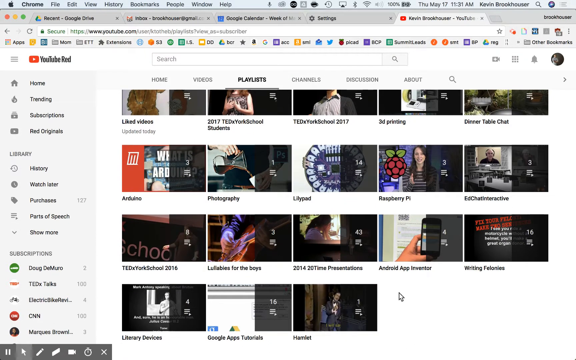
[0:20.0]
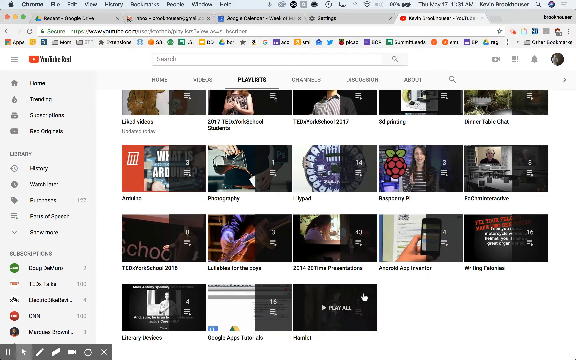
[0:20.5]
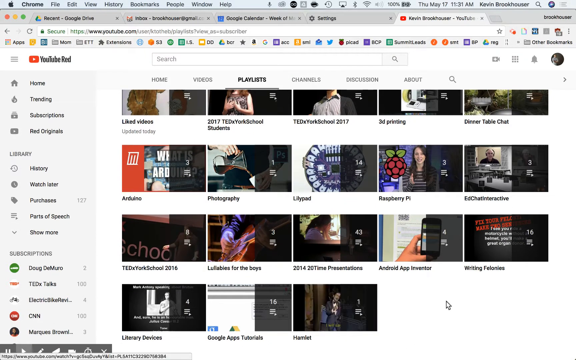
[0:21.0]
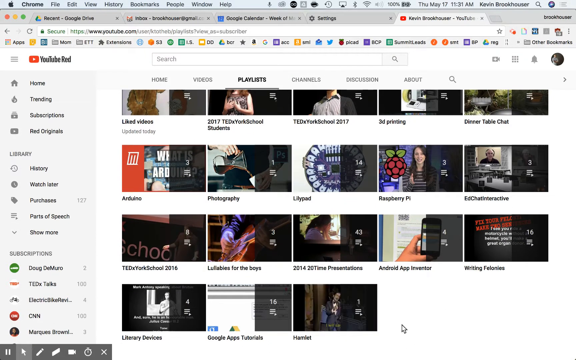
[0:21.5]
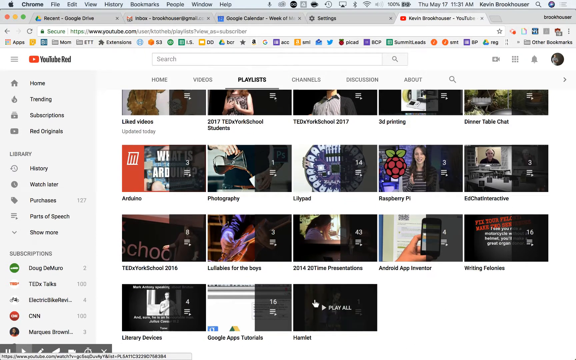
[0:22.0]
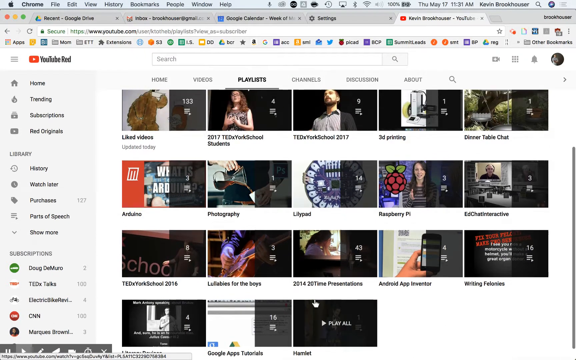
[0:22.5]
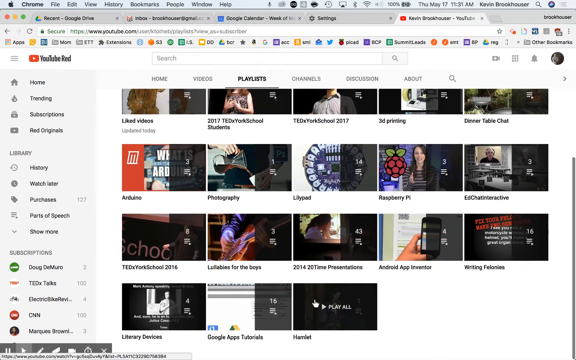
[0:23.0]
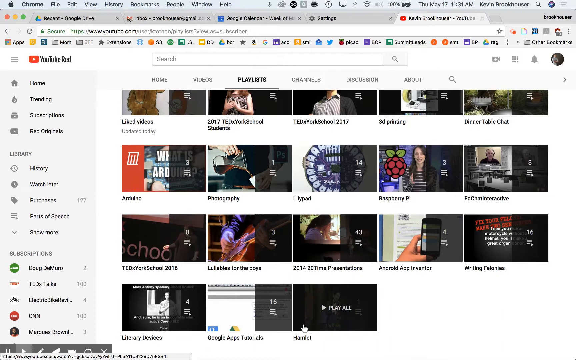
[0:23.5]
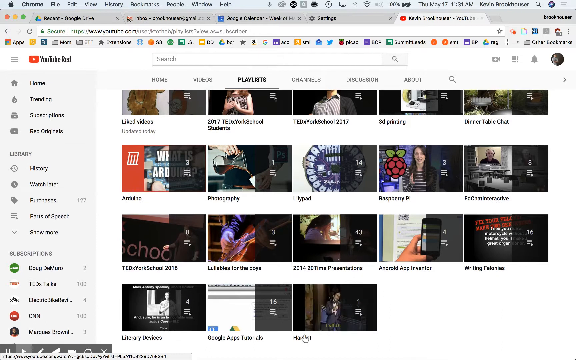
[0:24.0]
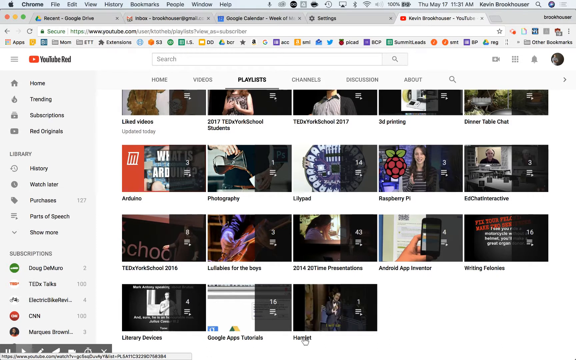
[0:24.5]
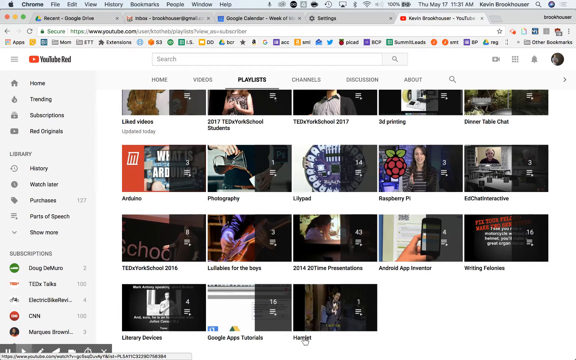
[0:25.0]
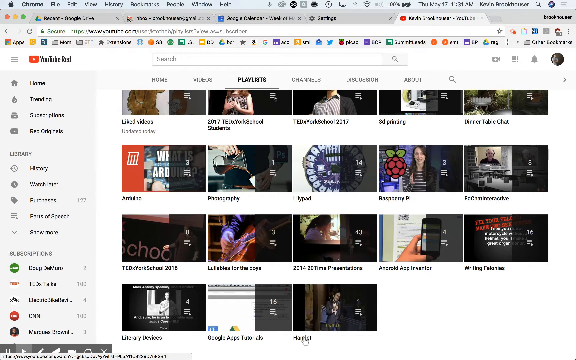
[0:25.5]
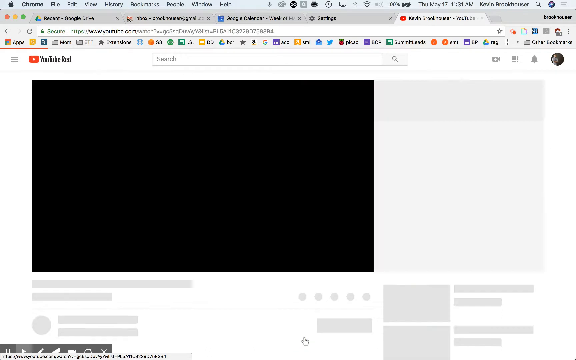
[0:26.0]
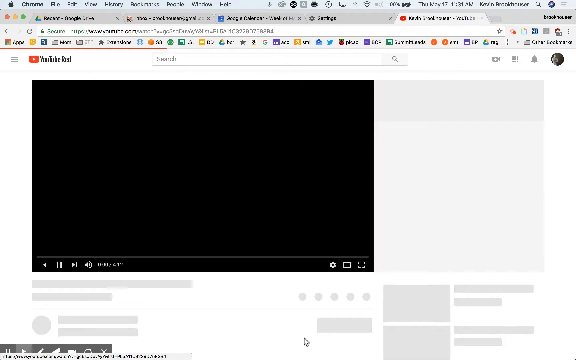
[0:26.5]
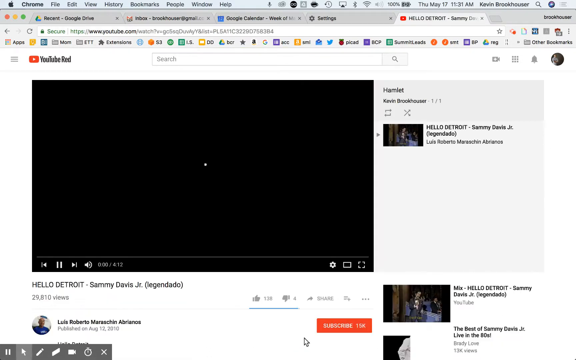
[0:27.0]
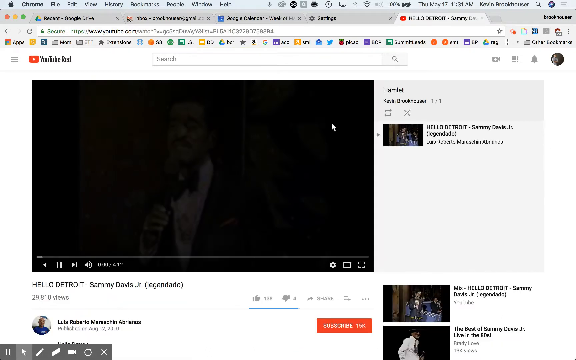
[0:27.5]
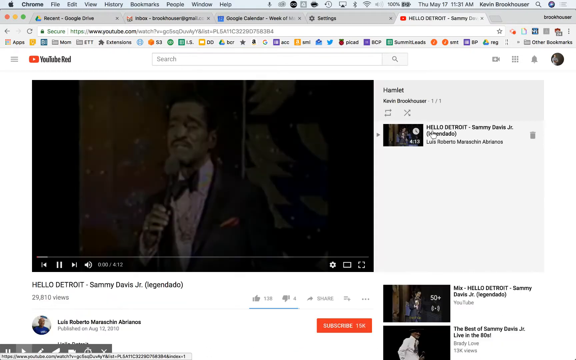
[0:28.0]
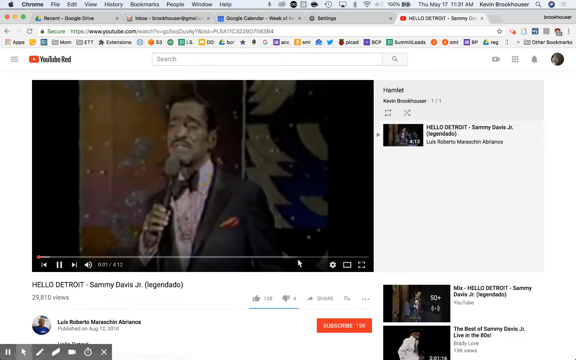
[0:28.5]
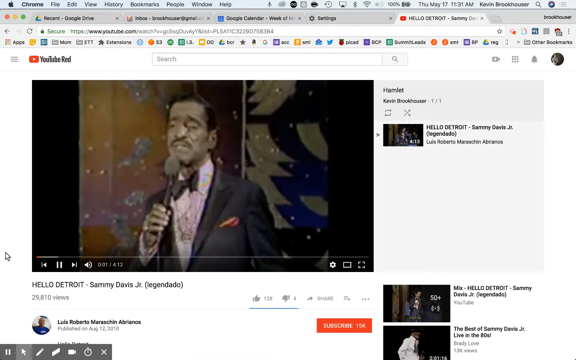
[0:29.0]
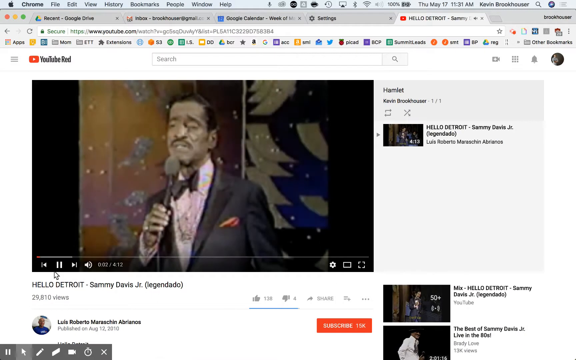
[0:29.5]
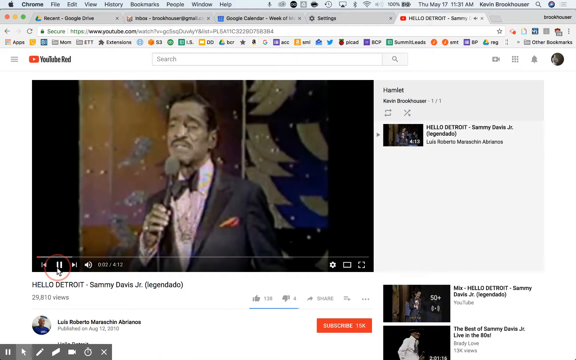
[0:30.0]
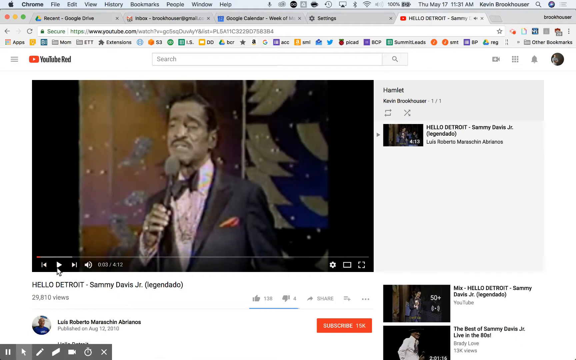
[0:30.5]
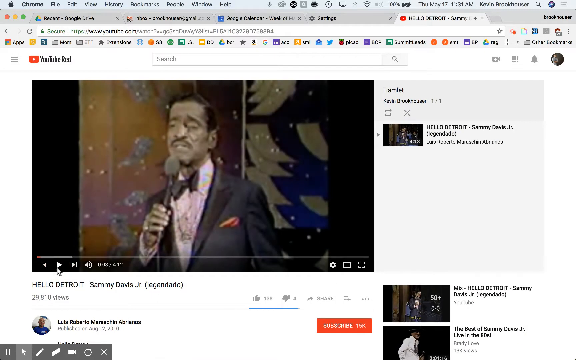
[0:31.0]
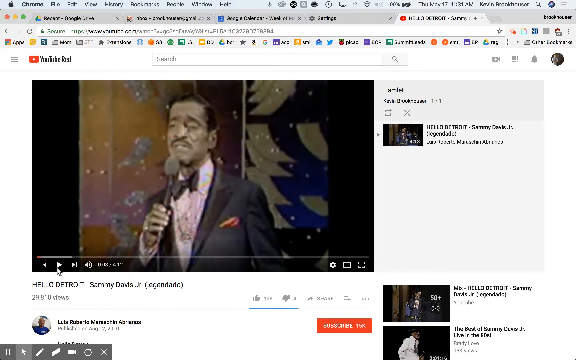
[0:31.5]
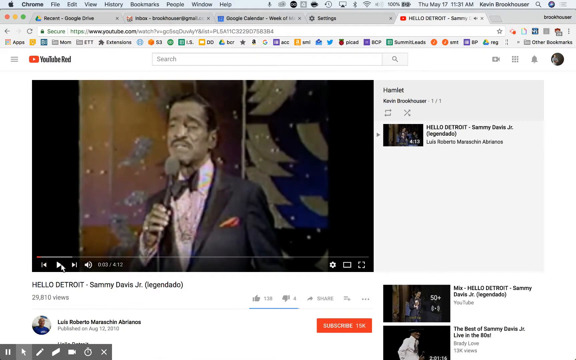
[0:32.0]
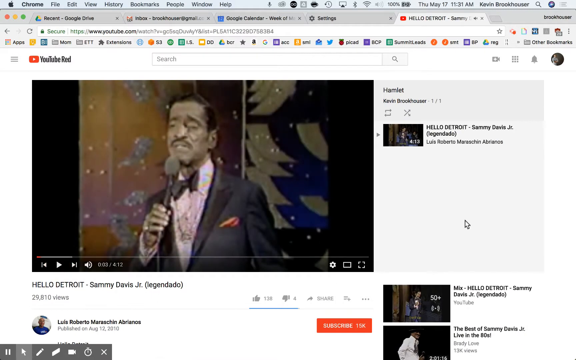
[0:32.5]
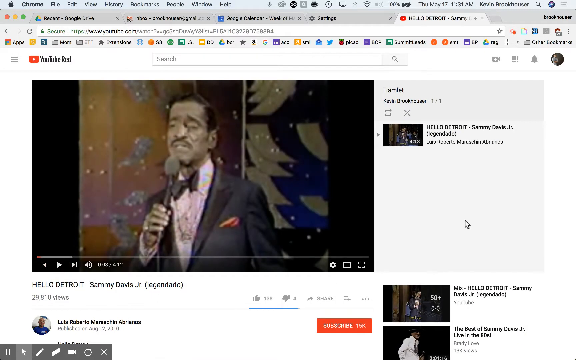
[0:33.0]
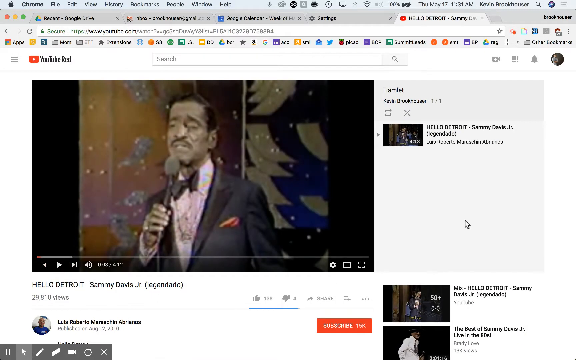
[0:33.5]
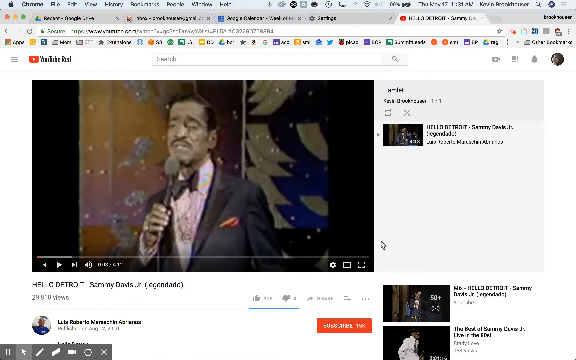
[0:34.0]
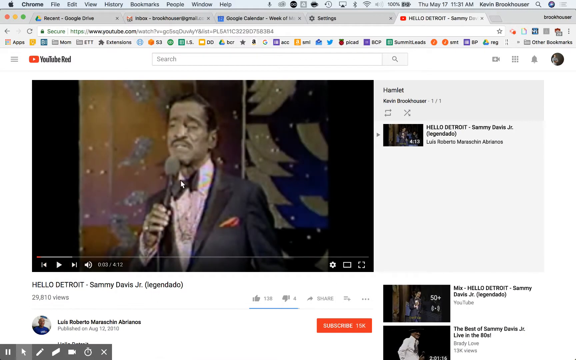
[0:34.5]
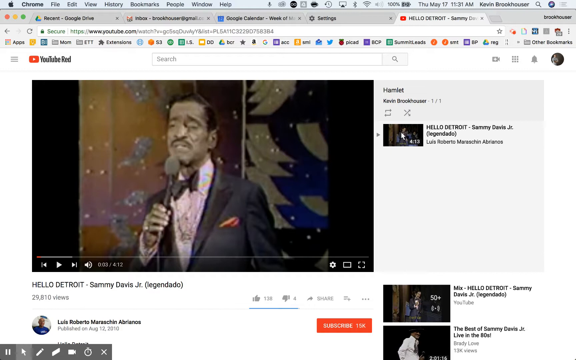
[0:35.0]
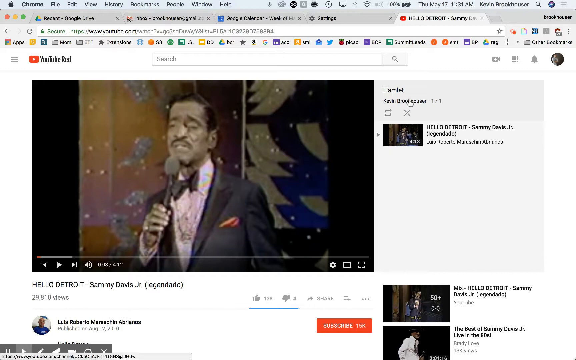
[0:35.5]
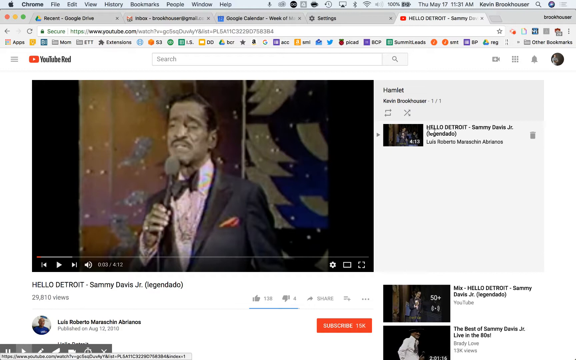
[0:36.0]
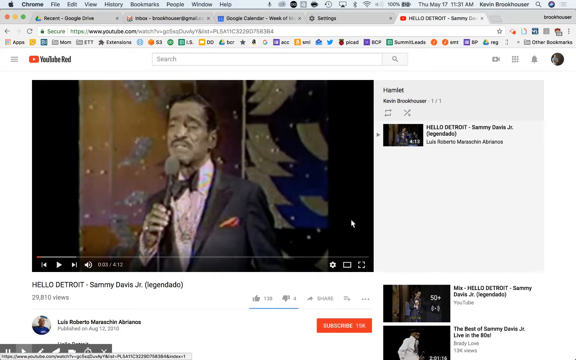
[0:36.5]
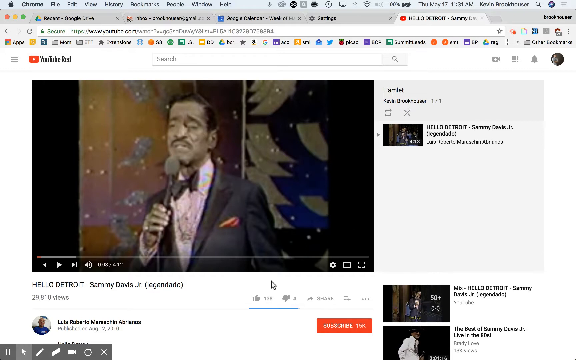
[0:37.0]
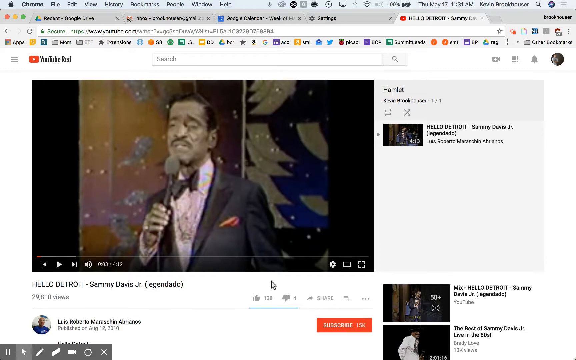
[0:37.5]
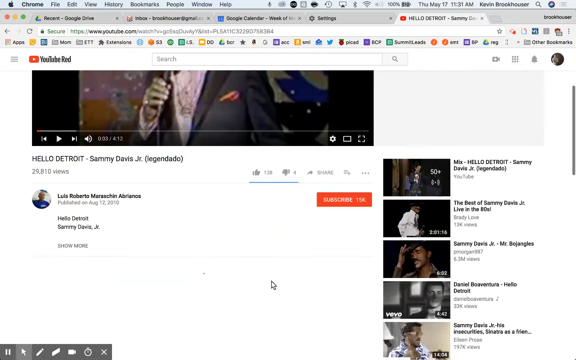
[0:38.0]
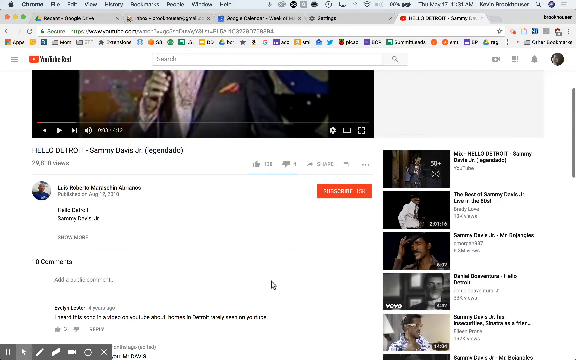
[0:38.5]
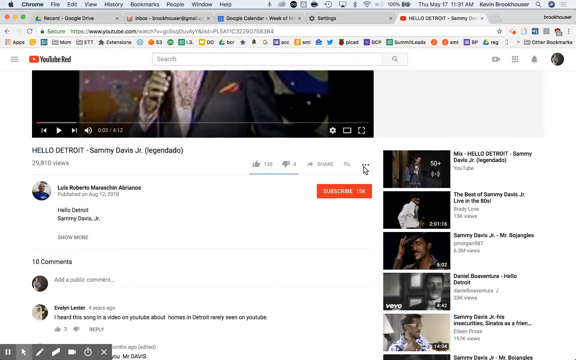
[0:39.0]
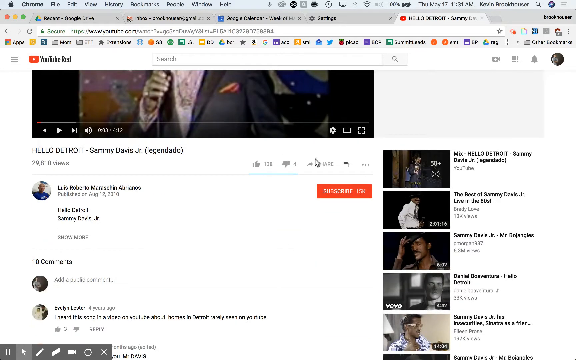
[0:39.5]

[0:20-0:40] He looks at his playlists and scrolls down to the bottom of them. When he clicks on the video, it says "play all". He clicks on one playlist containing a Sammy Davis Jr. video called Hello Detroit. Sammy Davis Jr., an older black man with short black hair, wears a suit, a bow tie, and a purple frilly shirt and holds a microphone. The background is orange, blue, and white. The video looks lower quality and seems quite old, as if taped a long time ago. It was uploaded in August 2010 and has been viewed 29,810 times. The user scrolls down the video page and pauses the video after a few seconds. He looks at the comments, a few of which talk about the song and video. The video's caption mentions the artist and song name.